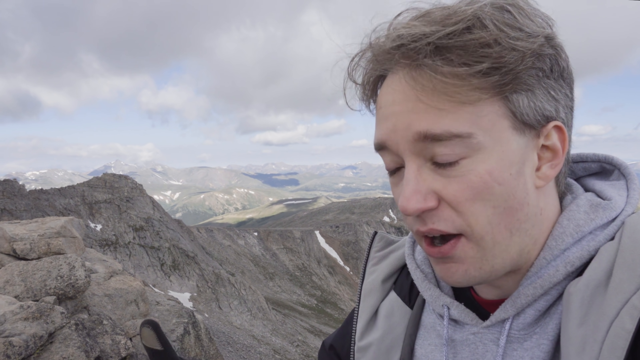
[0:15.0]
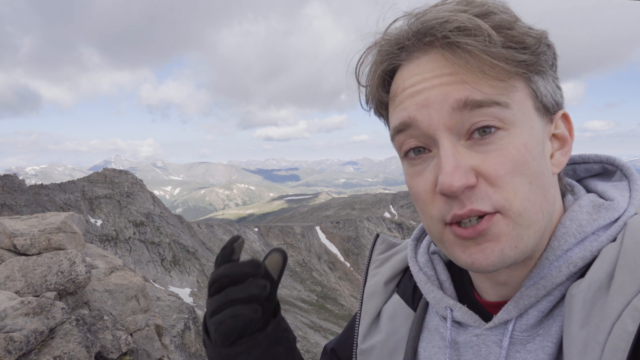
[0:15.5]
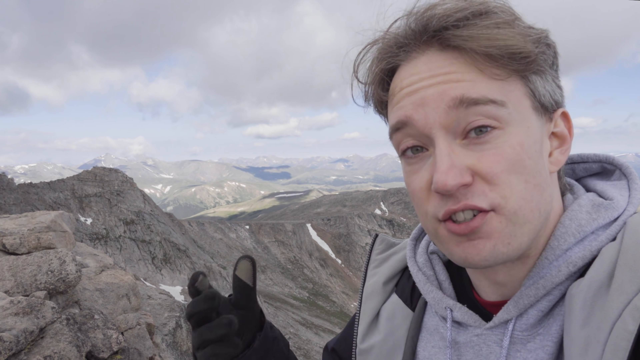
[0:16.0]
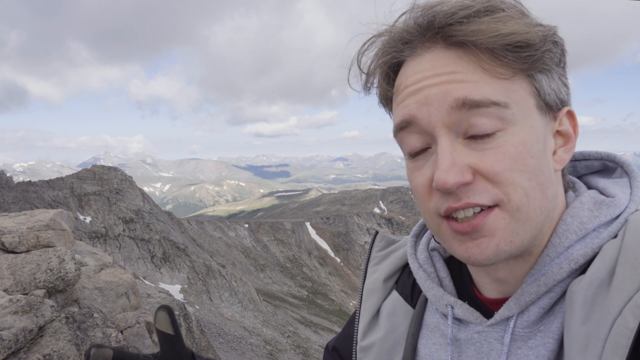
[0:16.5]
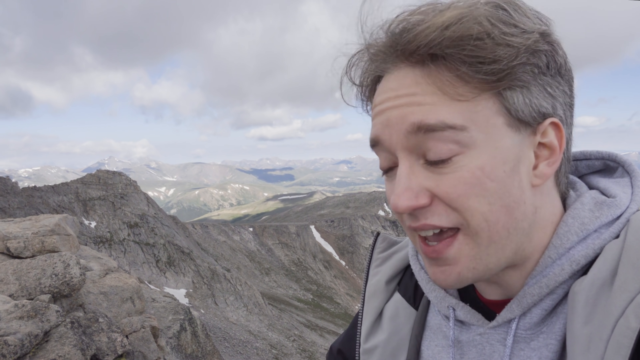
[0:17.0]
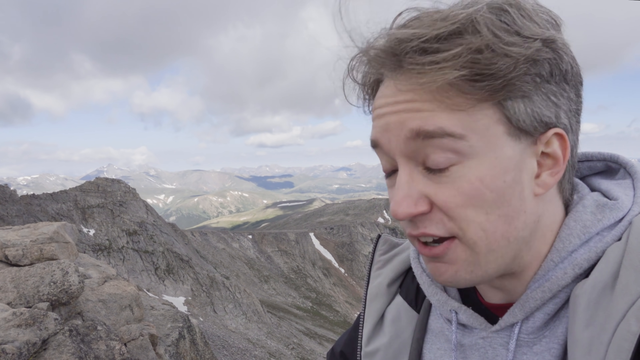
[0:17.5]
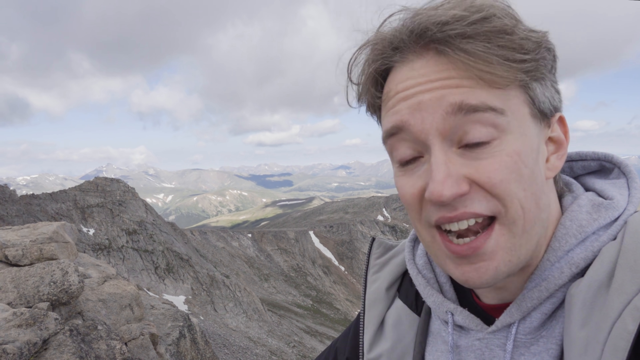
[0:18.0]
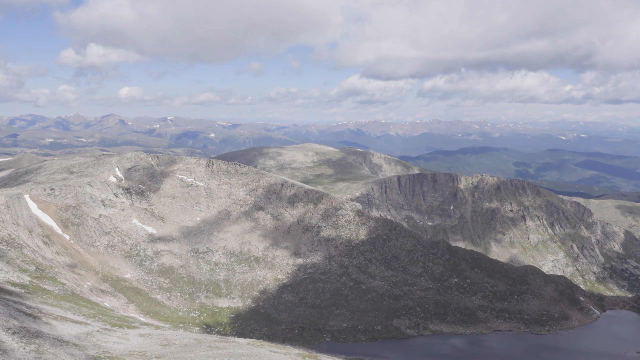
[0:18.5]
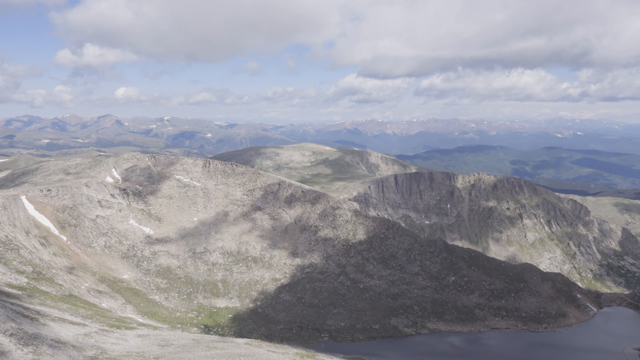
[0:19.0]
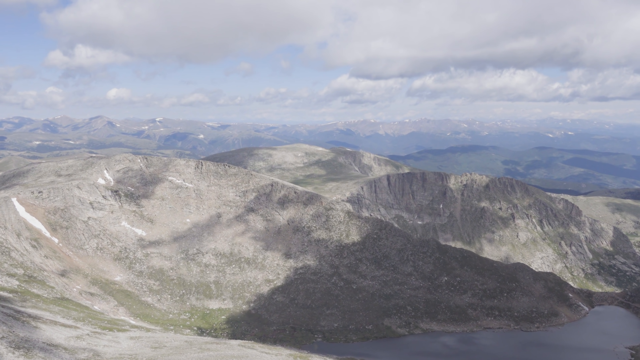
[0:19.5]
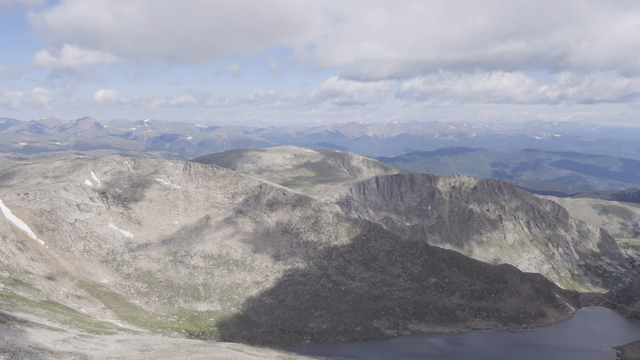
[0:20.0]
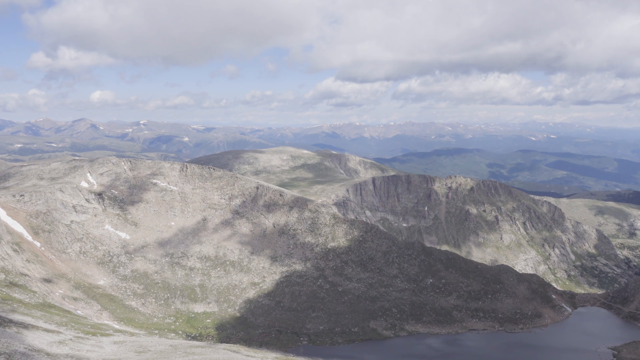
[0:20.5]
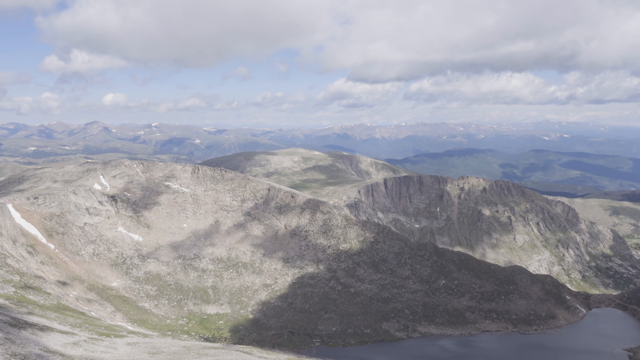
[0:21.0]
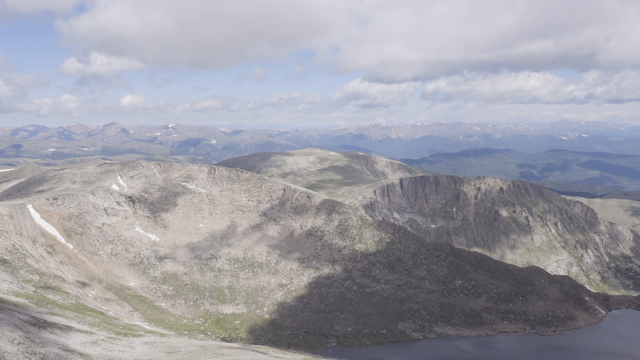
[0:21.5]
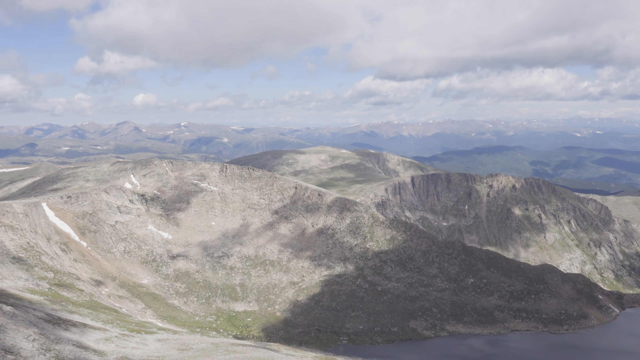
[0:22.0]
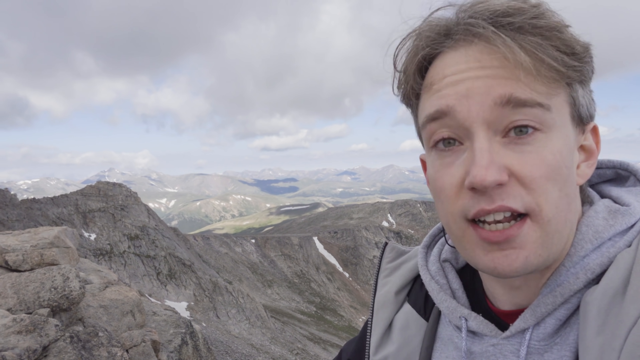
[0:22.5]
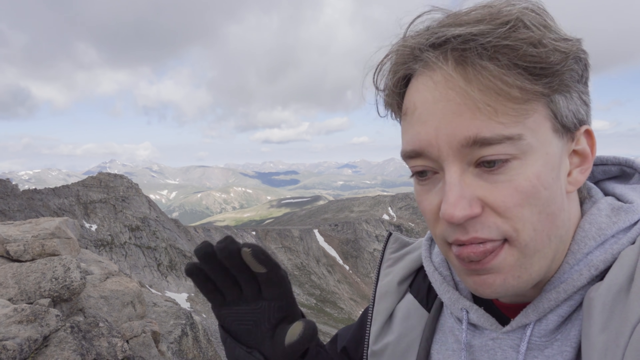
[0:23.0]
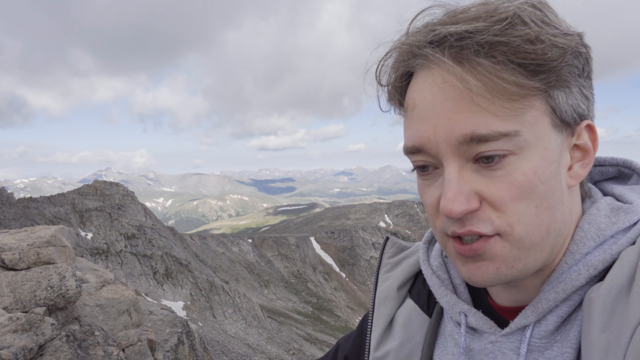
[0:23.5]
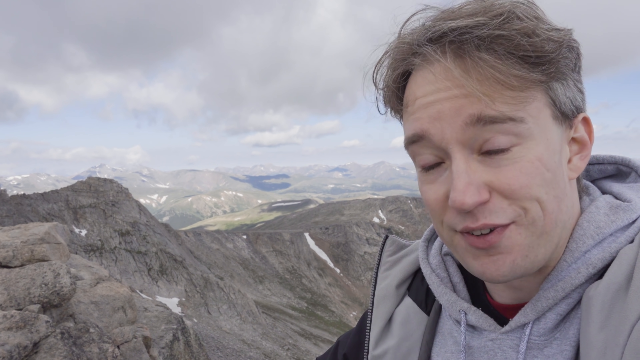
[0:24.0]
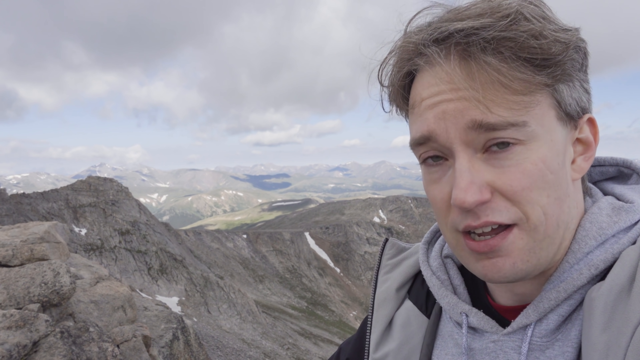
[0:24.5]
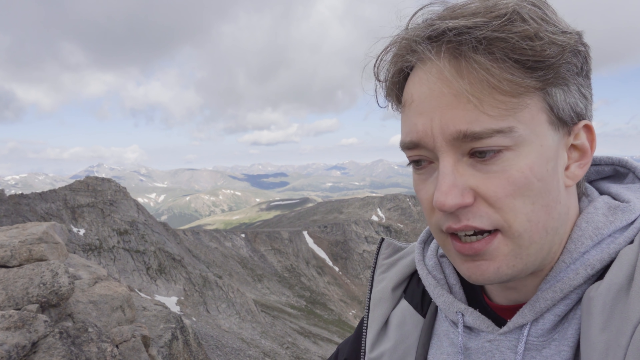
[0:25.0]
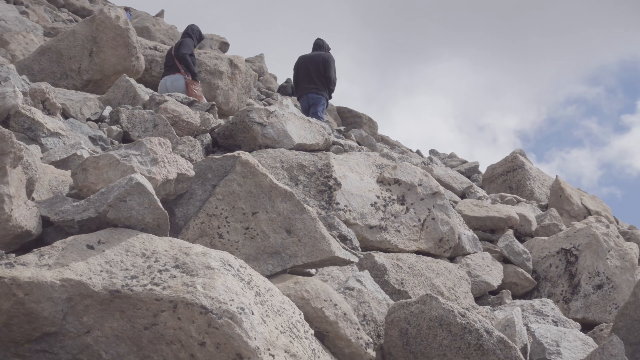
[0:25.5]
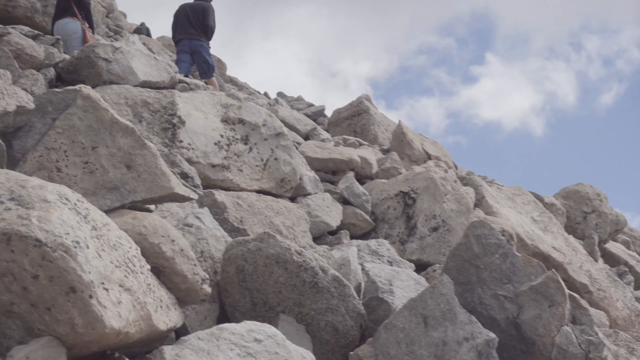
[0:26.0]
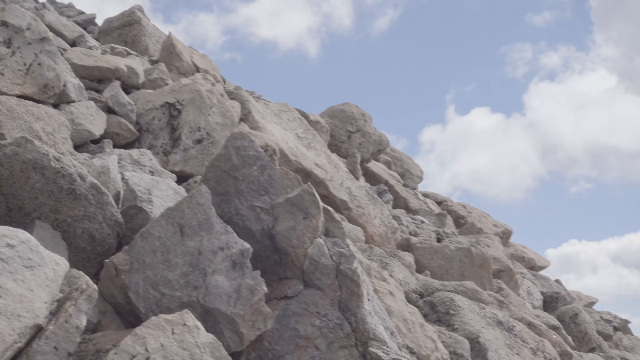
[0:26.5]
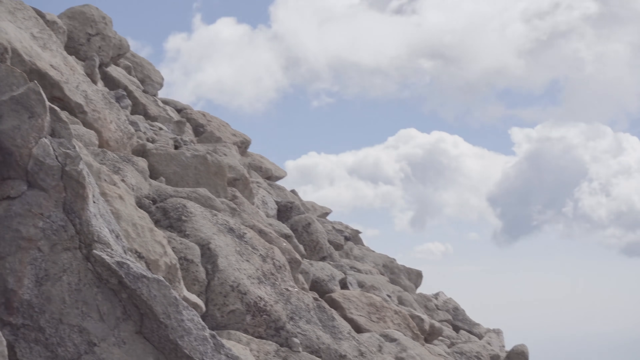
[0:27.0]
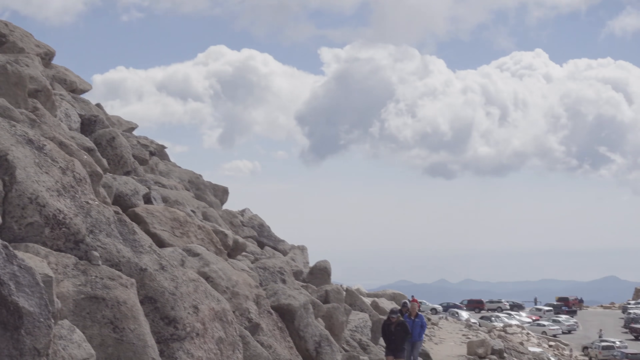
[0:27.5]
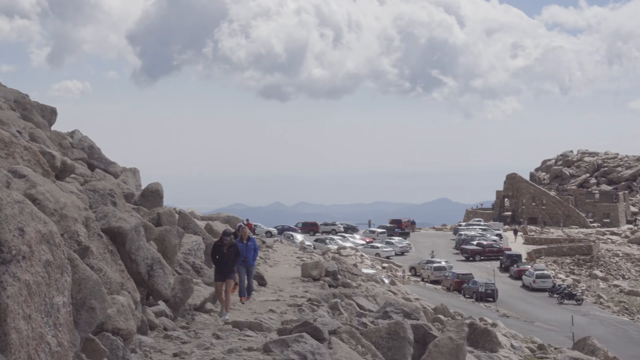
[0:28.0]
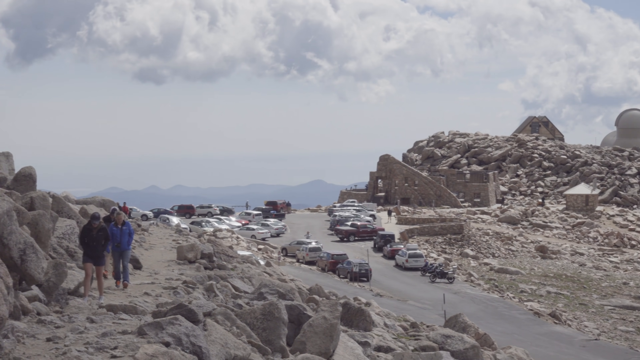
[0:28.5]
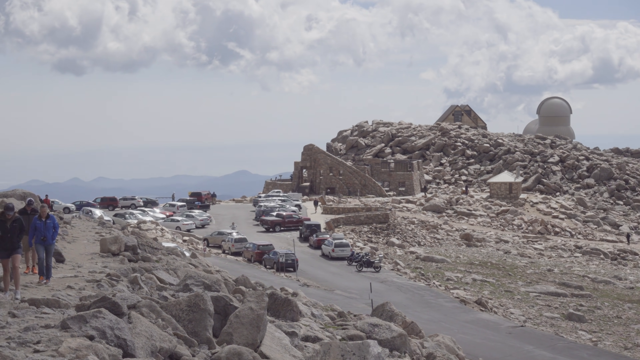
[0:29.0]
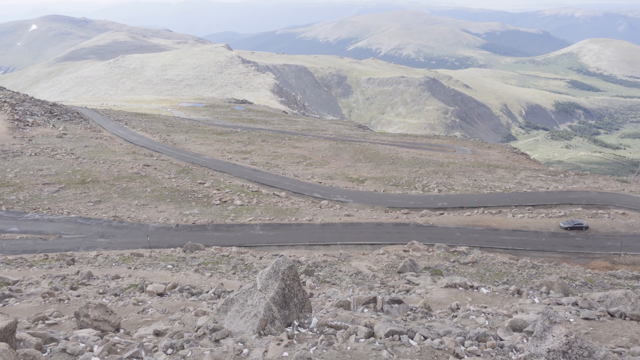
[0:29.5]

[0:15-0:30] The camera slowly pans across the gray, rocky mountains, where other people walk on top of and around the rocks. They appear to be heavily dressed for colder temperatures. The clouds move fairly quickly, and their shadows travel across the mountain. There appears to be snow in bits and pieces on the mountain. As the camera pans past the walkers, multiple parked cars come into view at the bottom of the mountain, along with what appear to be destroyed ruins of some sort of house. The man continues to speak to the camera.